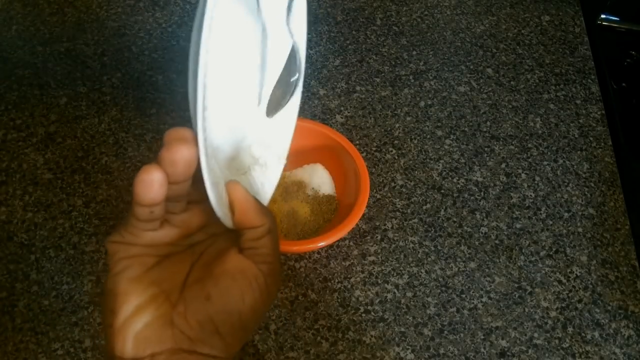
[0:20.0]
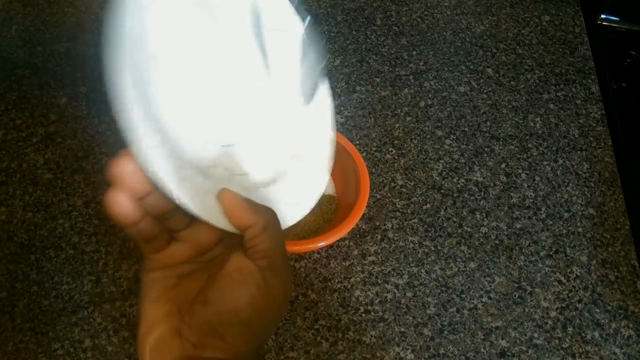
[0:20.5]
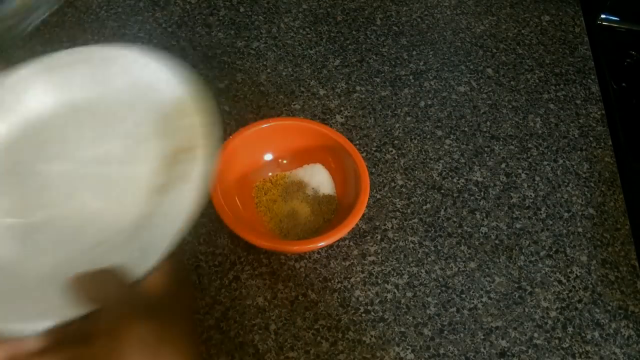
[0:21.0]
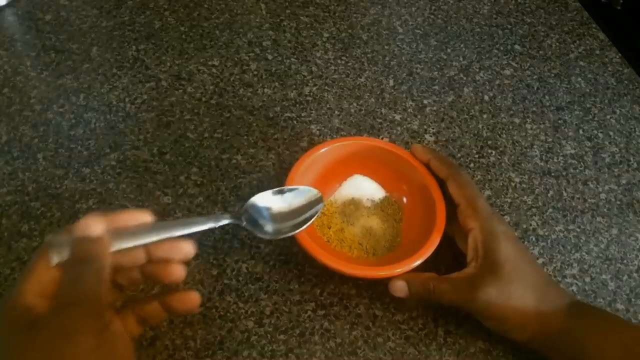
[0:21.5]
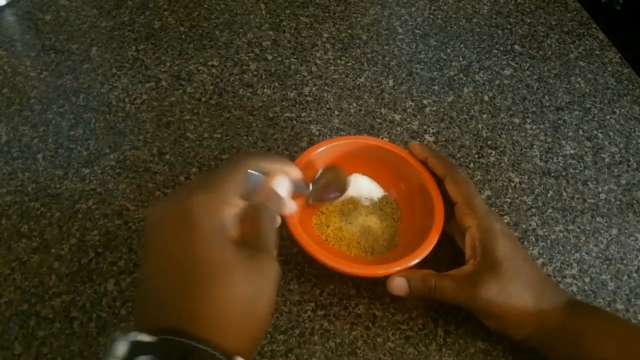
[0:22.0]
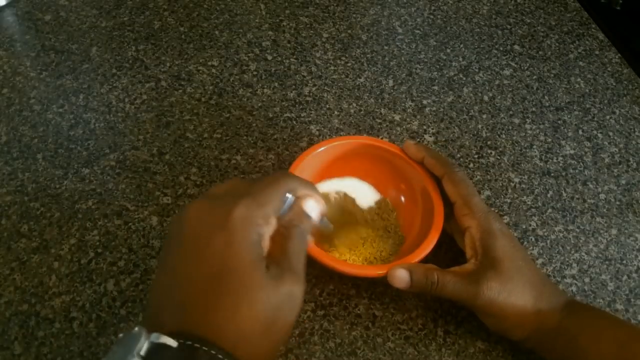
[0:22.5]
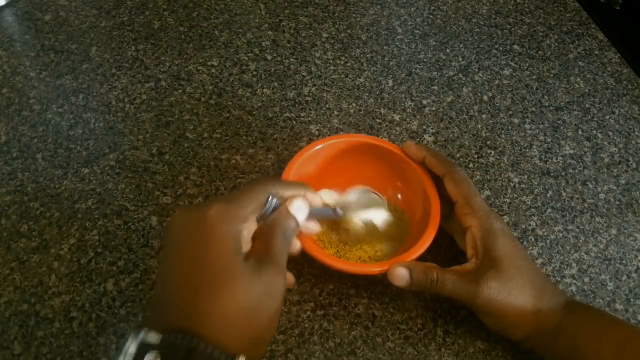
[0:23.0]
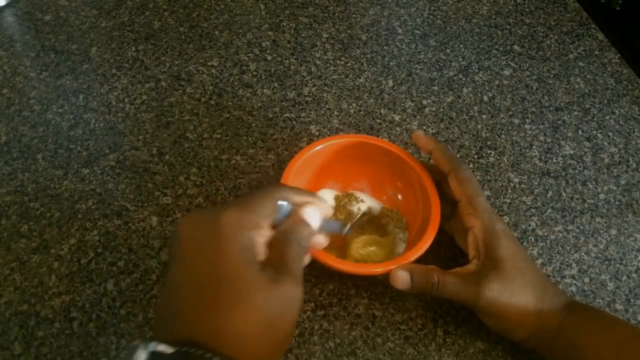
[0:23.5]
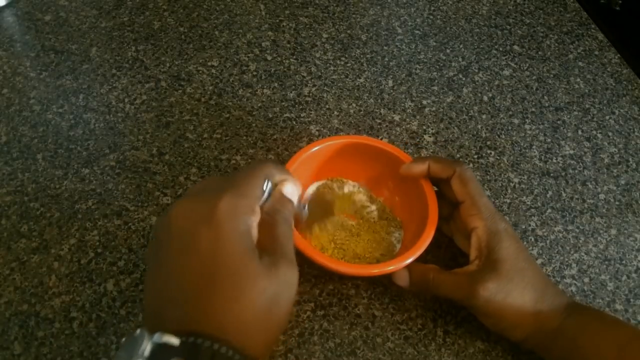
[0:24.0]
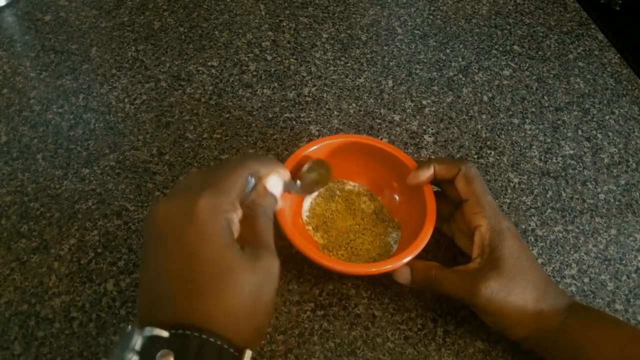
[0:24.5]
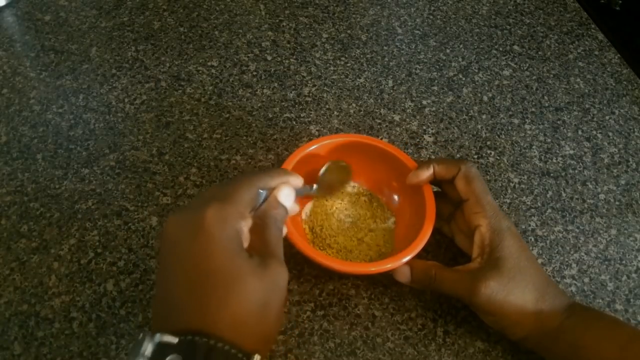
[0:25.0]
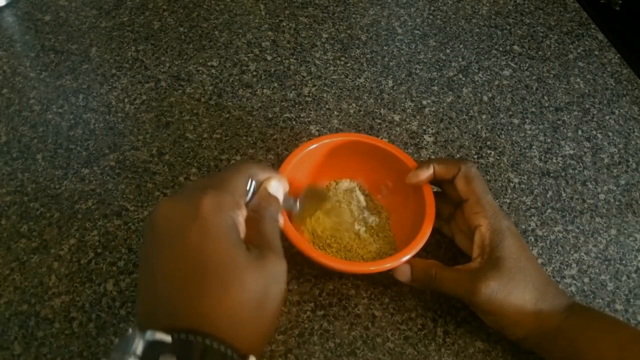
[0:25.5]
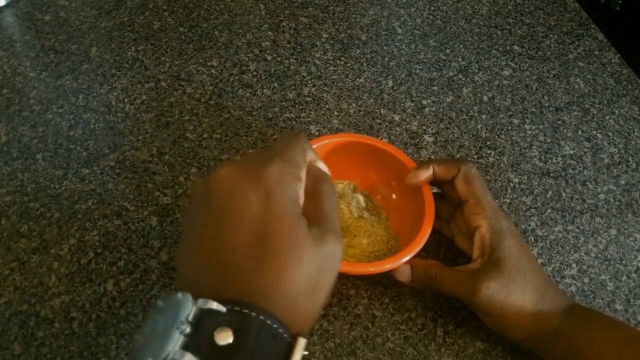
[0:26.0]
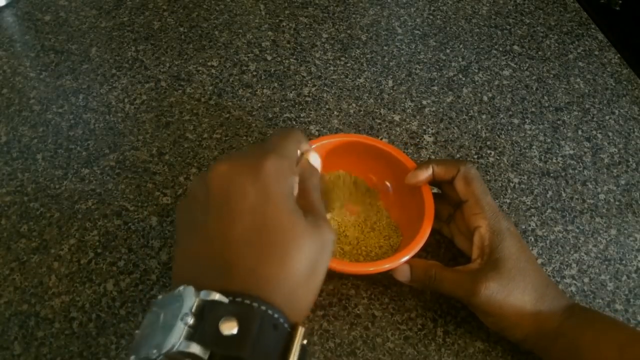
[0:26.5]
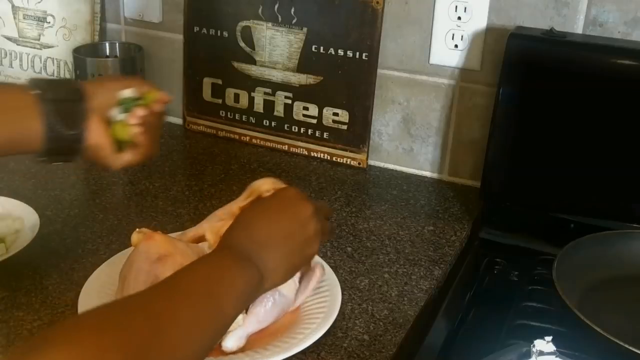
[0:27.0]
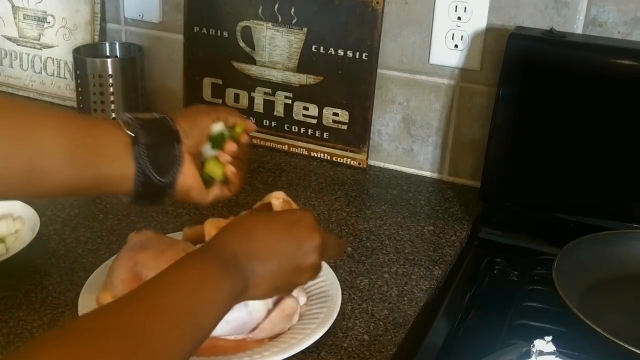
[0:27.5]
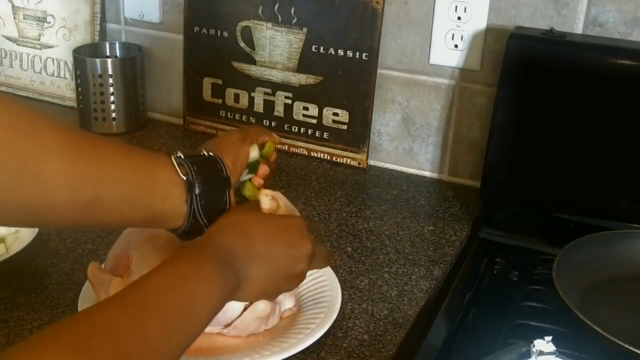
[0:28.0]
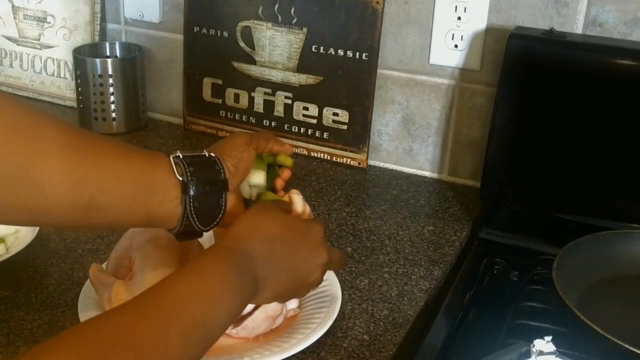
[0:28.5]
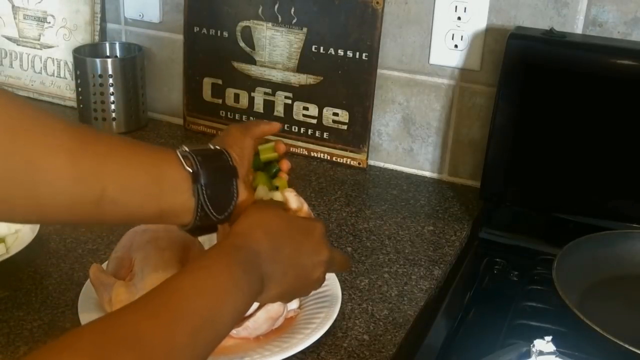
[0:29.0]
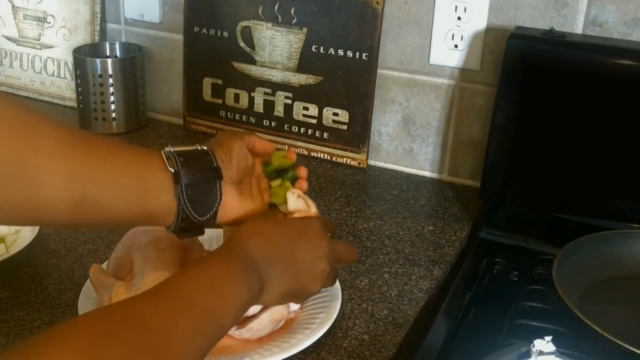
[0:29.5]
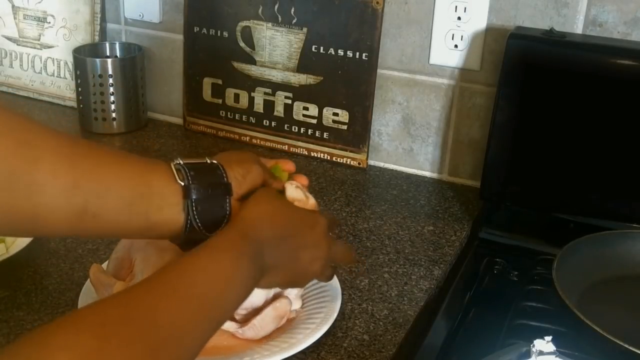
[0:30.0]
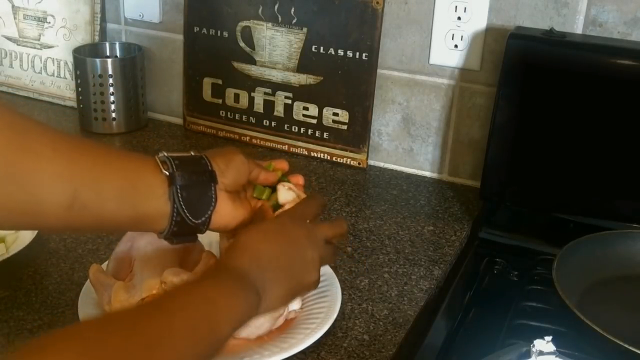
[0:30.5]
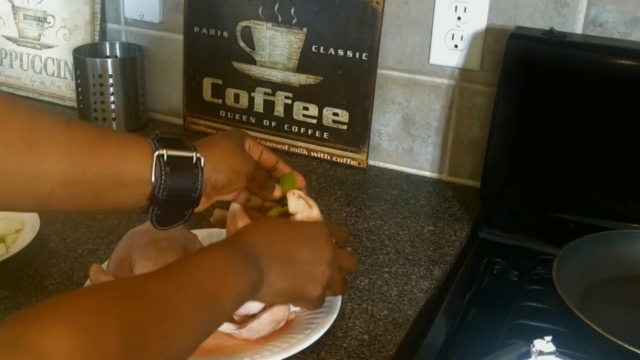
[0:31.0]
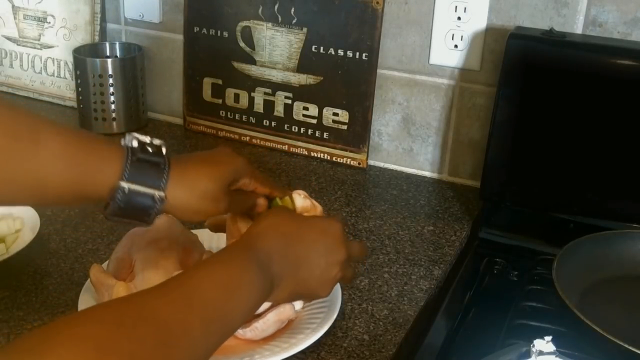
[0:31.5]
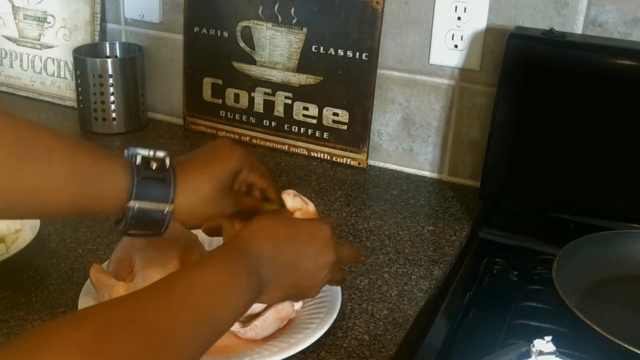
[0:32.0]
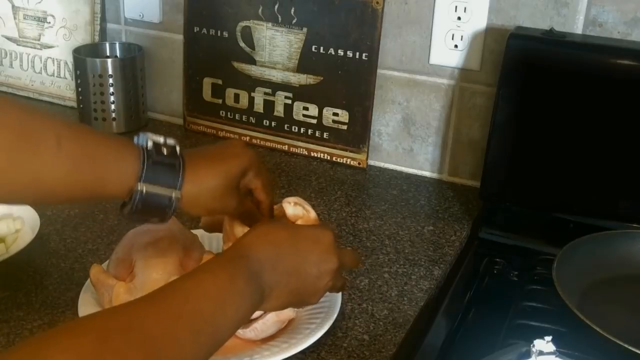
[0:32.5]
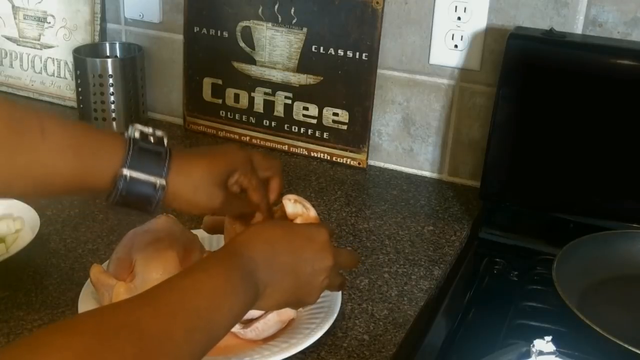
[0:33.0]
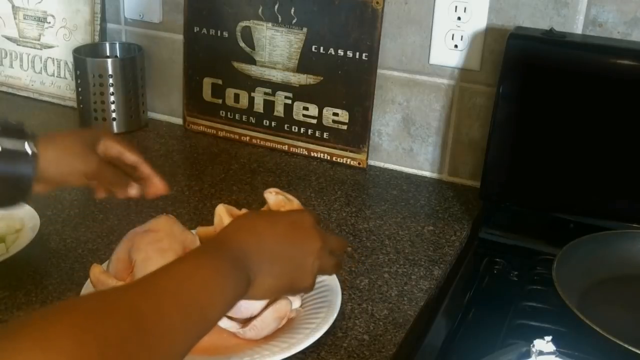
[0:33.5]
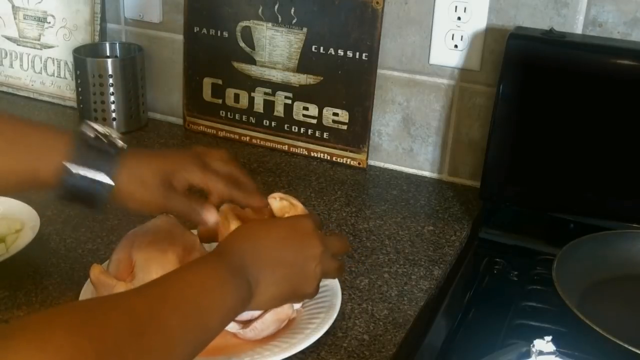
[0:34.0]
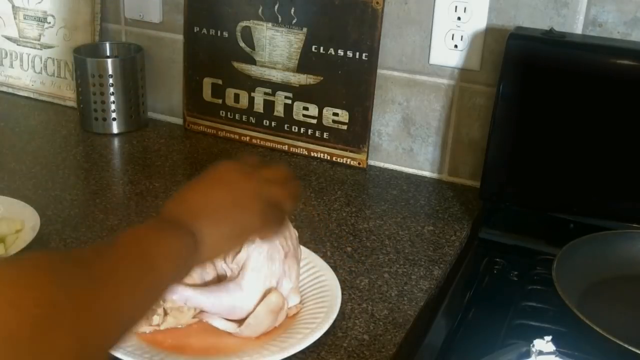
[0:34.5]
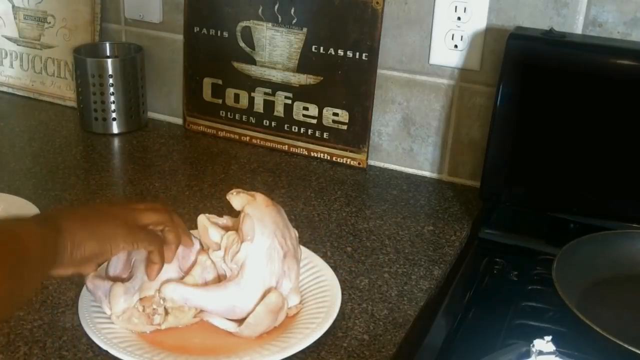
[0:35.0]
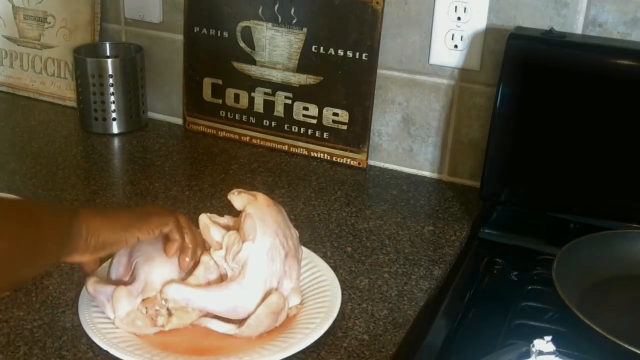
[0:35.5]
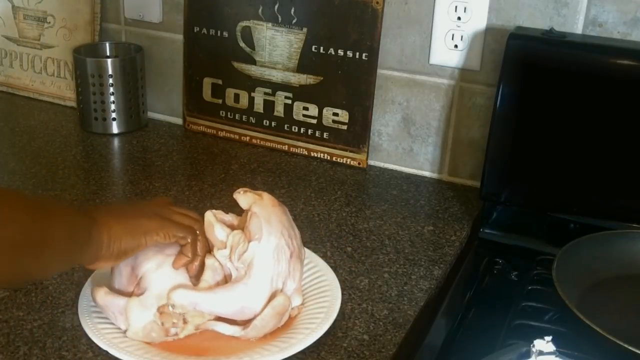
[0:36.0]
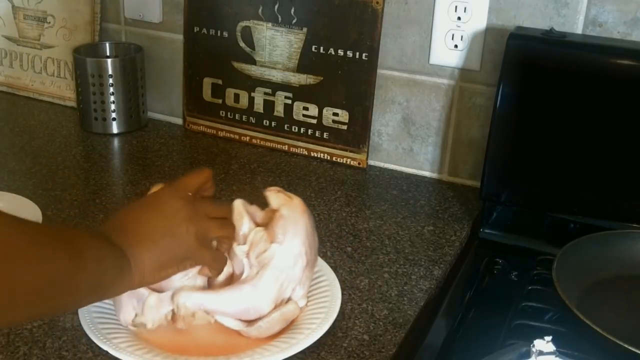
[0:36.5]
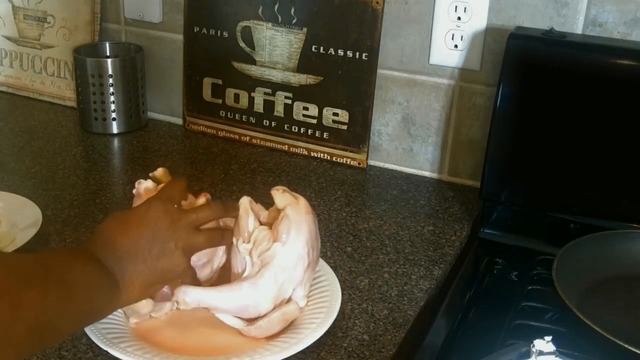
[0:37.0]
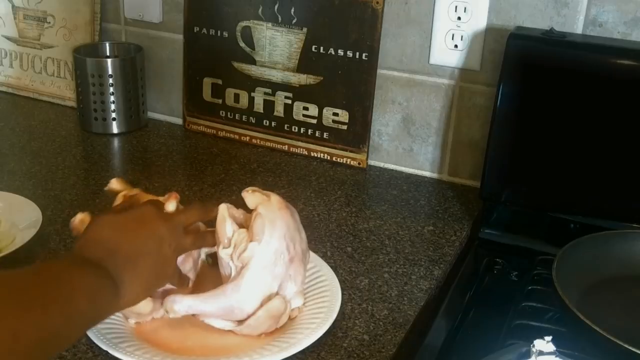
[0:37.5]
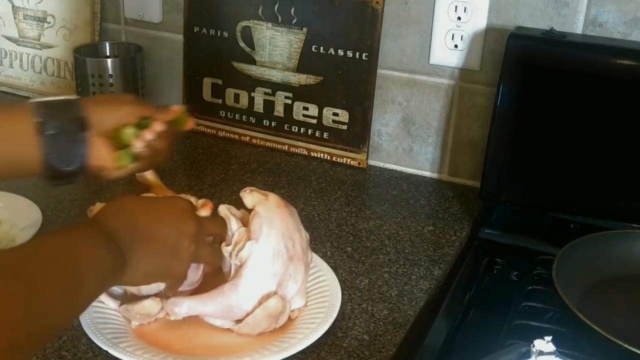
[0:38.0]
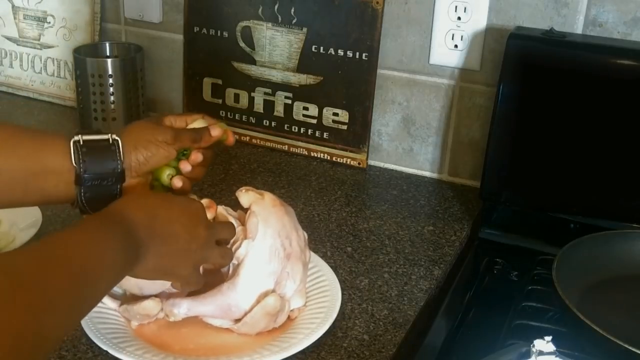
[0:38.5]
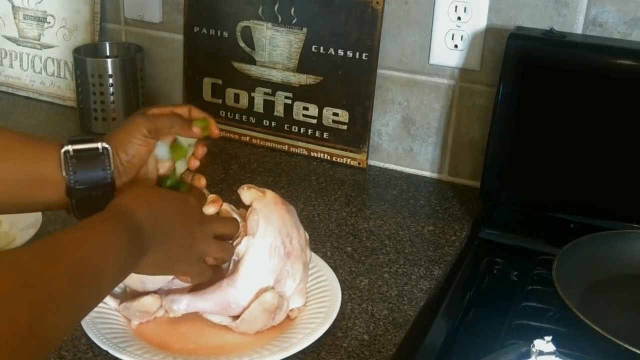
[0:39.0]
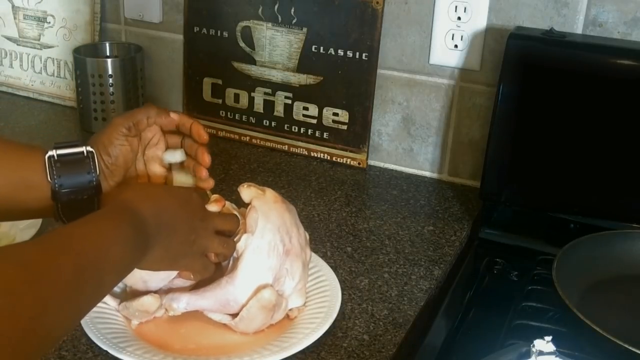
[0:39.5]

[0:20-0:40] The same hands, apparently Chef Kendra's, stir the spices in their cup. They take the rest of the ingredients, possibly celery and maybe some onion, and put them into the cavities of the Cornish hens, stuffing the hens with the chopped-up vegetables. One of the wrists wears a giant wristwatch, which seems to be getting into the food. The spice is unidentified, possibly paprika and salt combined.